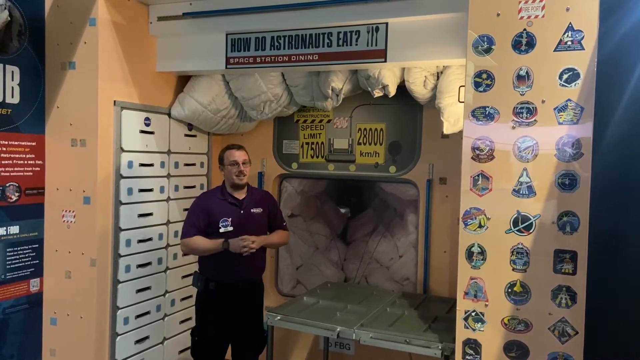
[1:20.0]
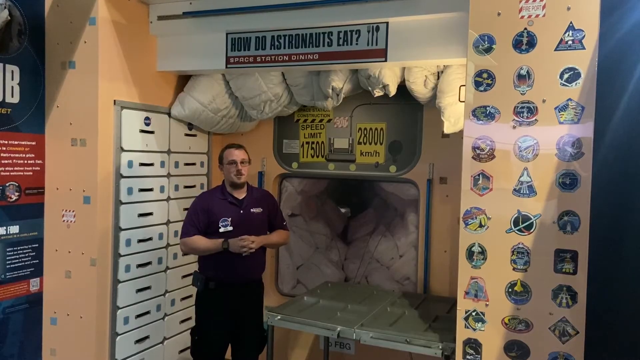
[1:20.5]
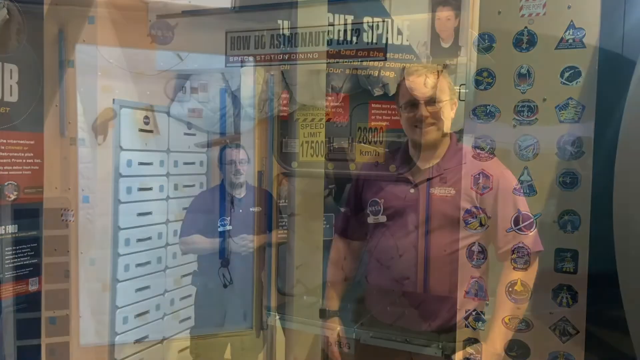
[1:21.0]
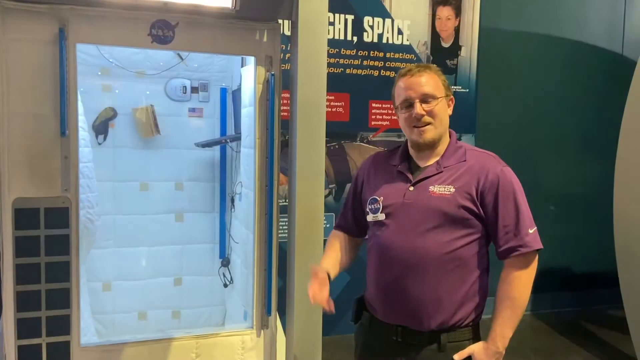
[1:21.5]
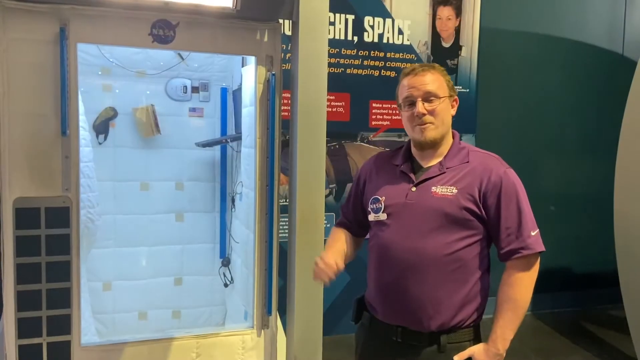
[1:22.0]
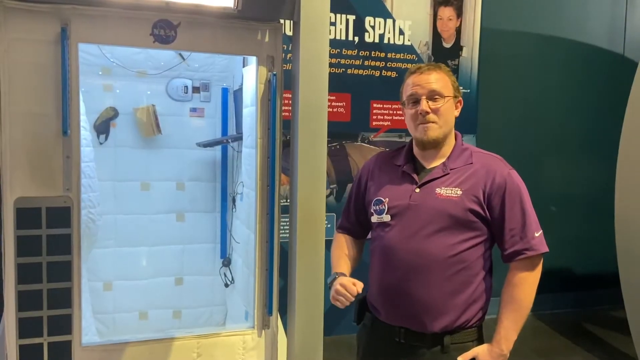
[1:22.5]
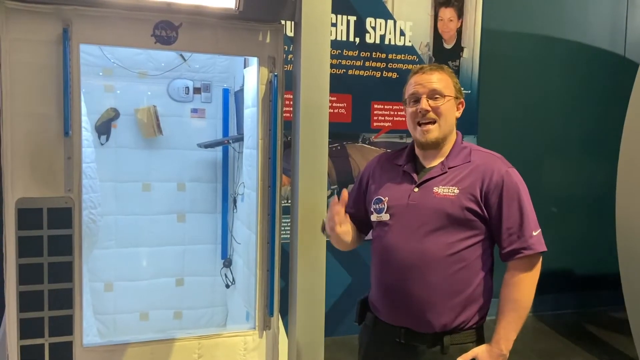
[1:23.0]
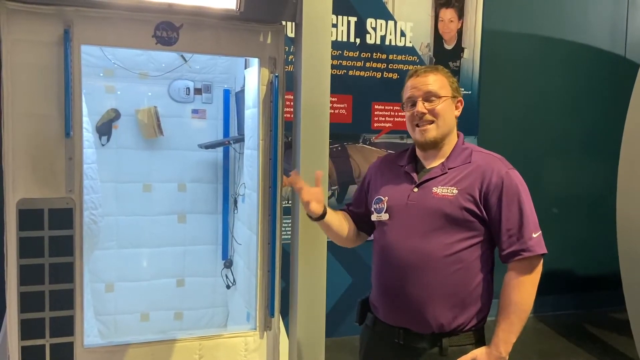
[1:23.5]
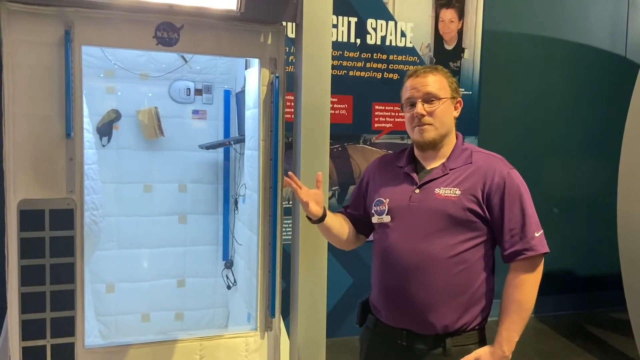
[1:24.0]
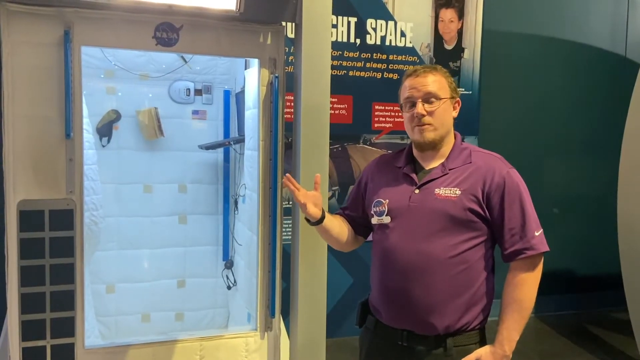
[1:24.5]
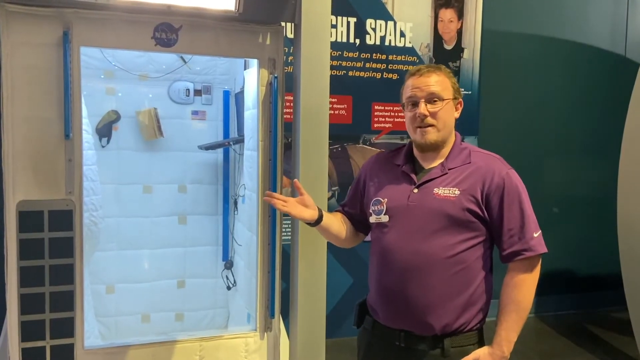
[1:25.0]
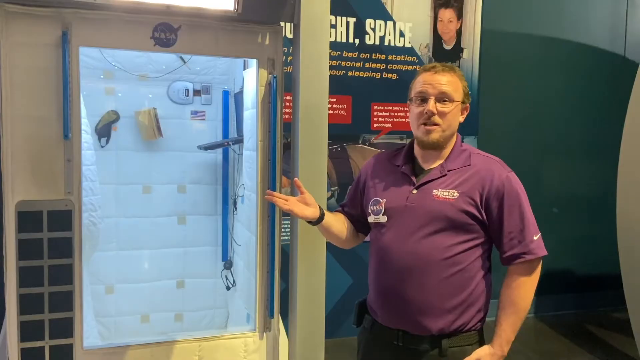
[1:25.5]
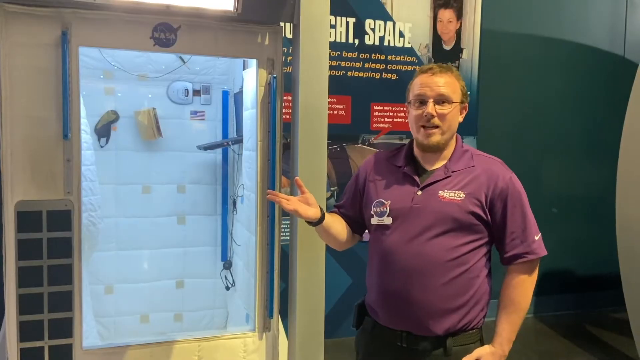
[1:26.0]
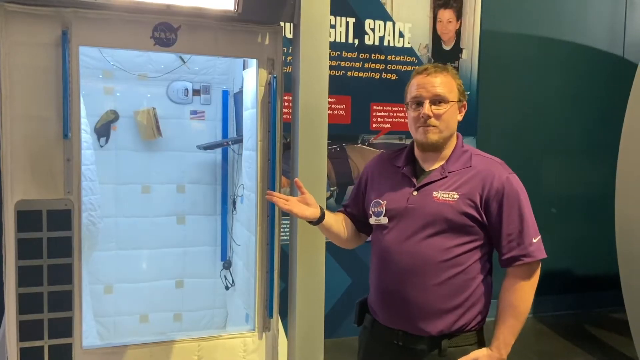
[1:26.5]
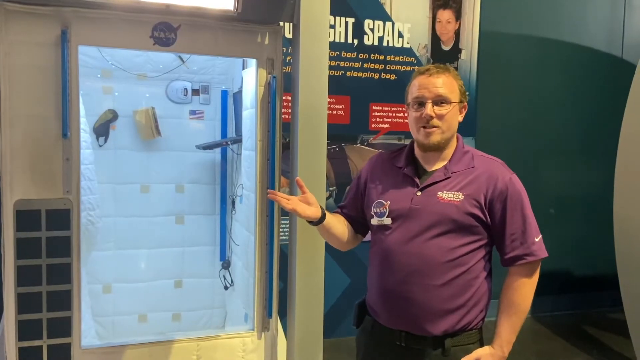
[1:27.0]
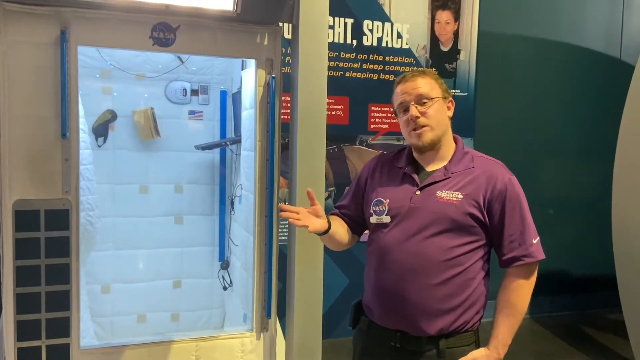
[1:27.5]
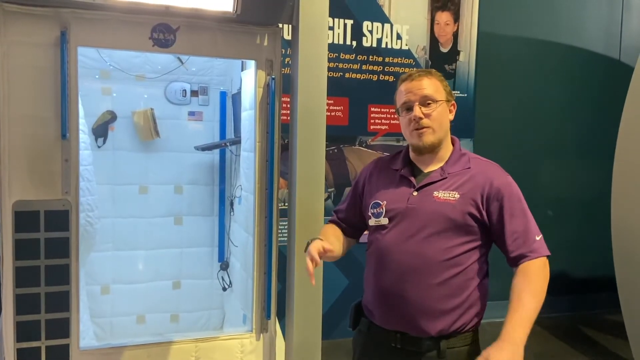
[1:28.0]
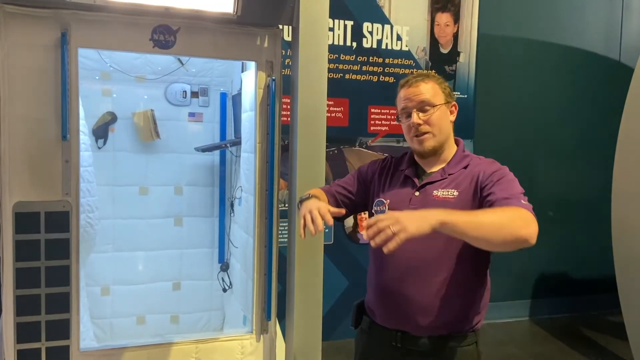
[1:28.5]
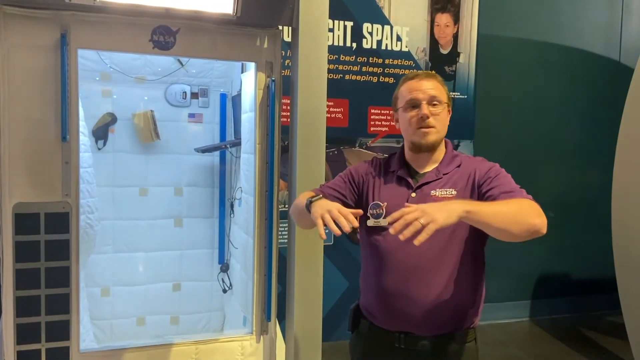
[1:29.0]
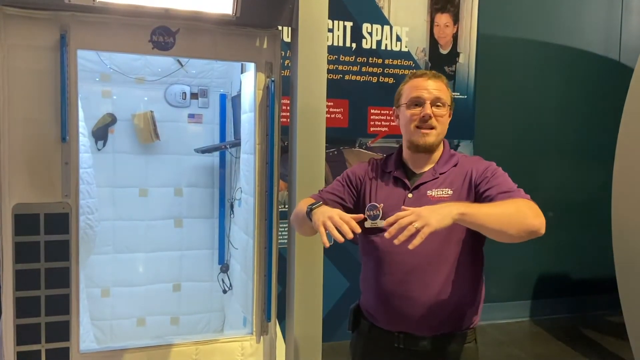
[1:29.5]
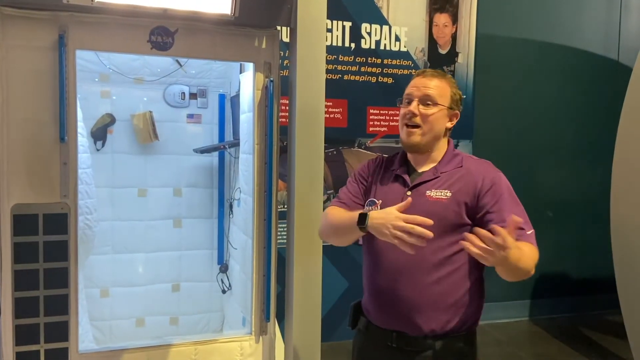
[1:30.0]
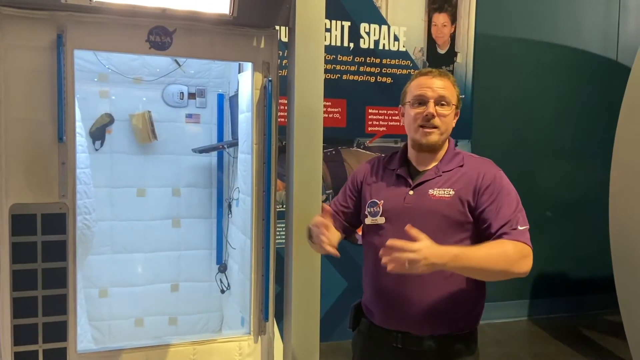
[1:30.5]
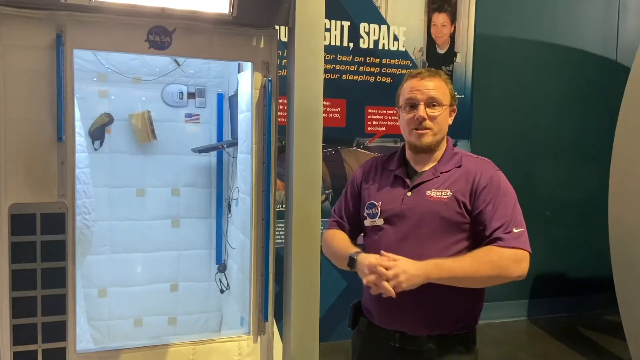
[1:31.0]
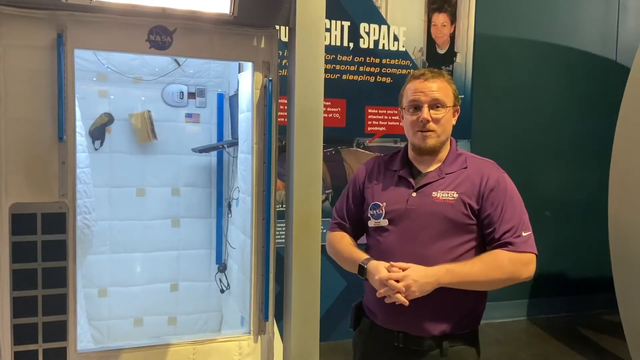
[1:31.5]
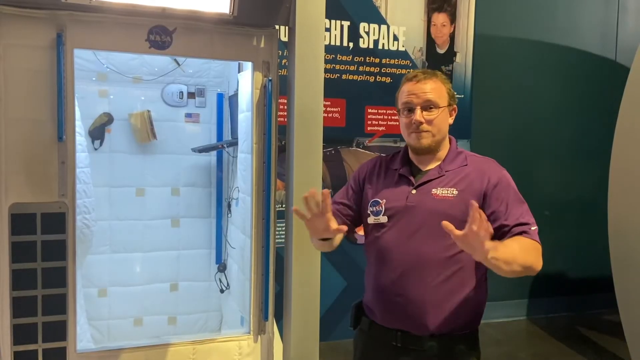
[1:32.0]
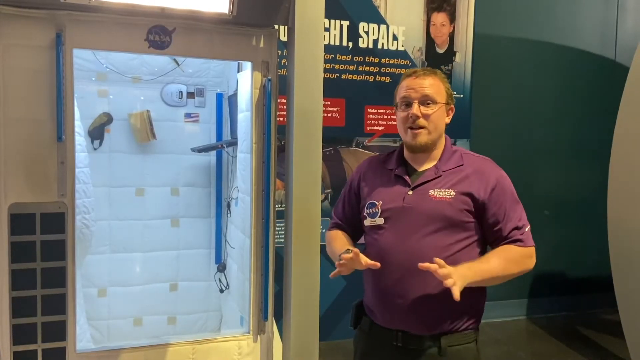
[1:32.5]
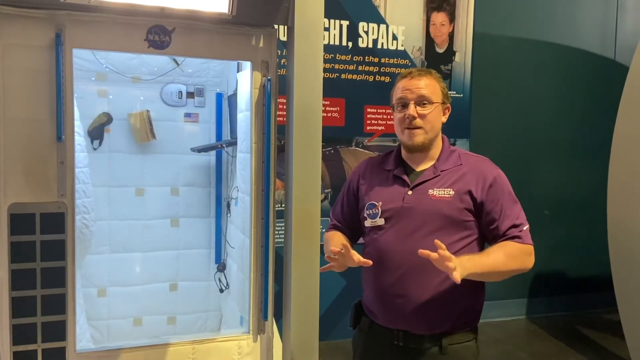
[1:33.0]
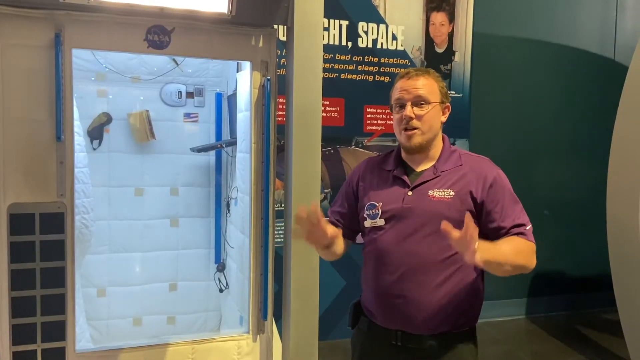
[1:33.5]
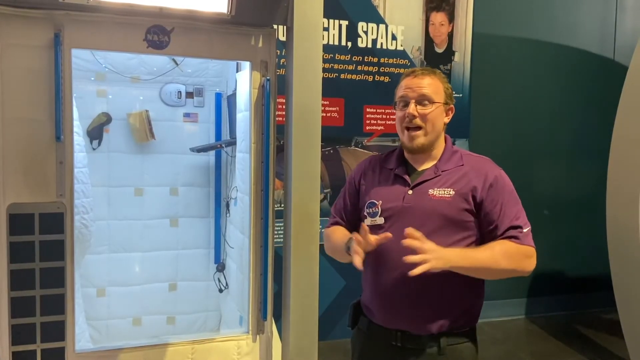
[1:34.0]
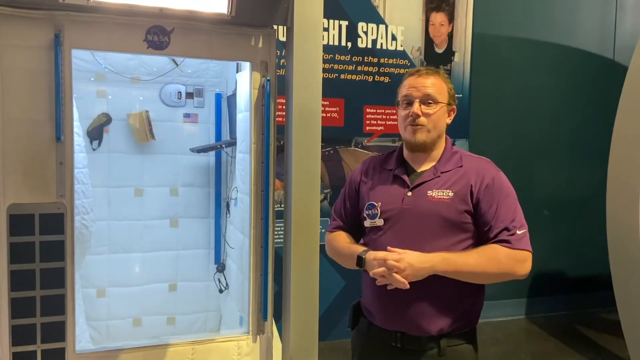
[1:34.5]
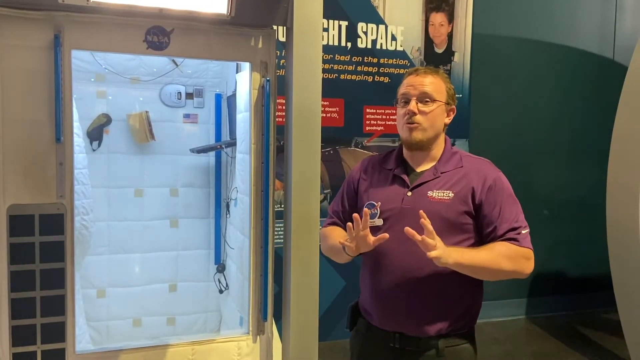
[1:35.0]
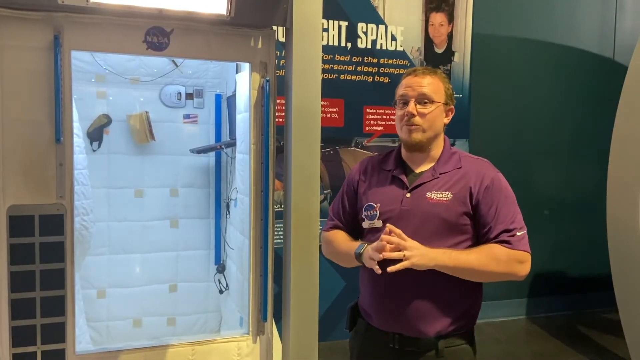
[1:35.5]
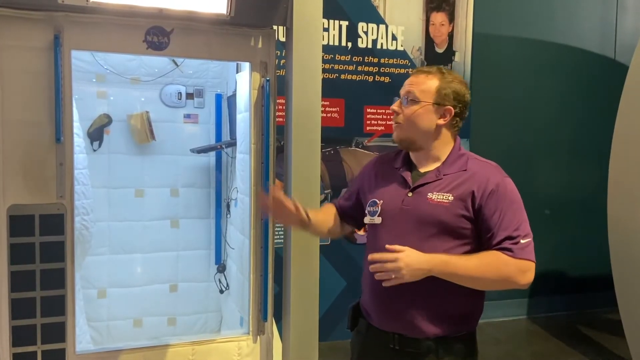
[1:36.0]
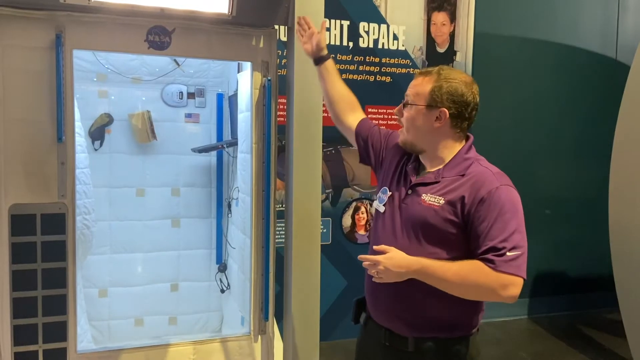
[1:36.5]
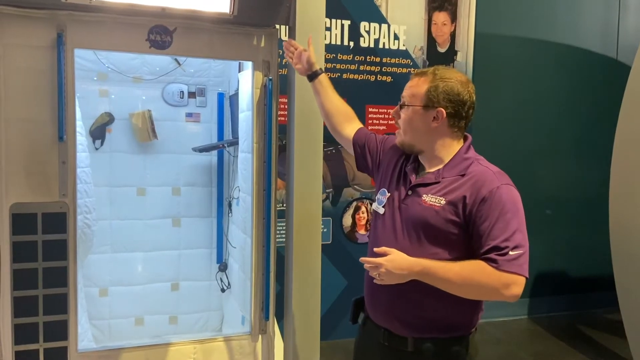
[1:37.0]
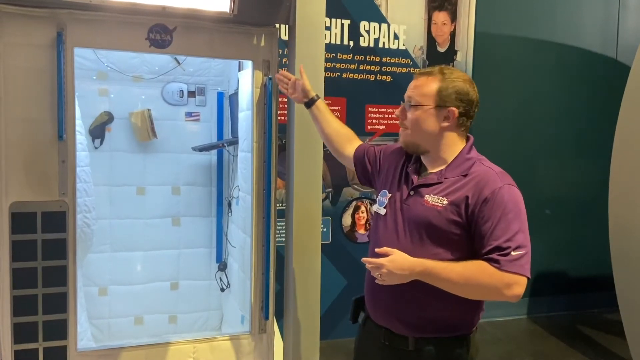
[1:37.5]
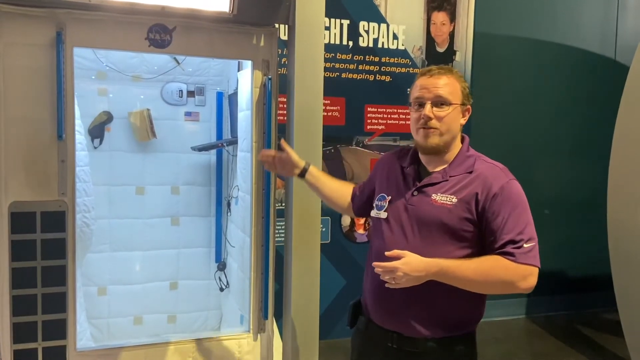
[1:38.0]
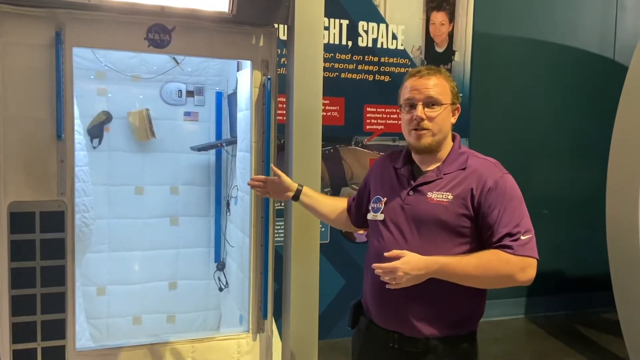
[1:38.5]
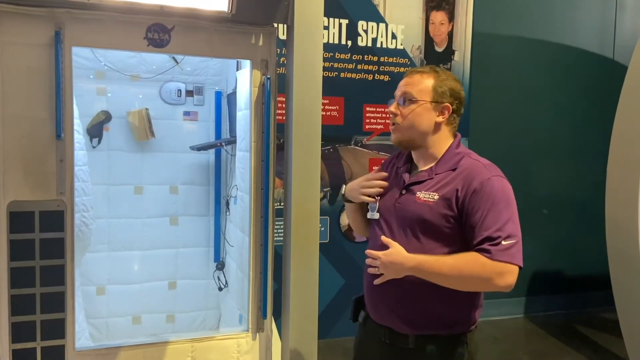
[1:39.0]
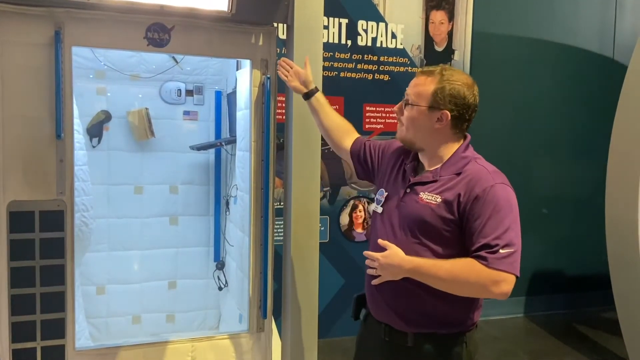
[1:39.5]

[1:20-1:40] The man continues his presentation, now over to the right, standing next to a sort of vending-machine-looking thing that is illuminated like a refrigerator and shows its contents inside. In the top left are the first two items: the first looks like part of a gun with a trigger, and the second looks like a wallet or possibly a sandwich. Both seem to be in small plastic bags. He does not interact with the machine; he just points at certain things and keeps talking.